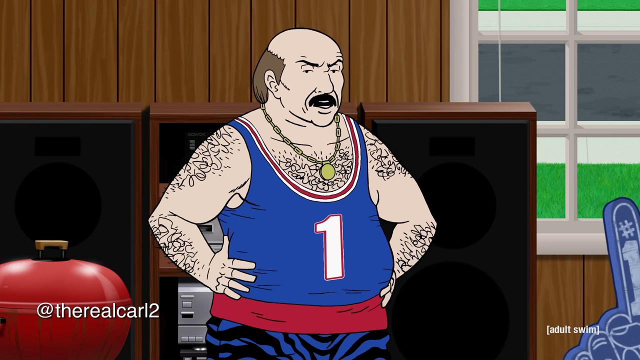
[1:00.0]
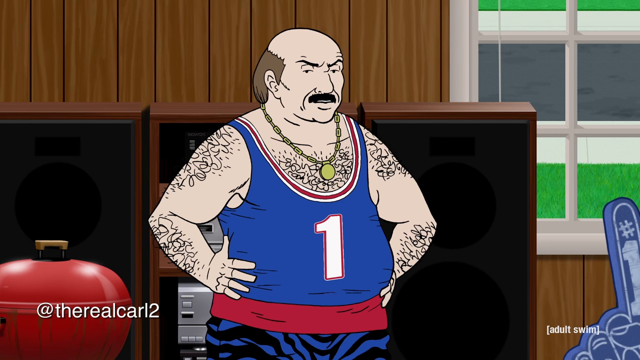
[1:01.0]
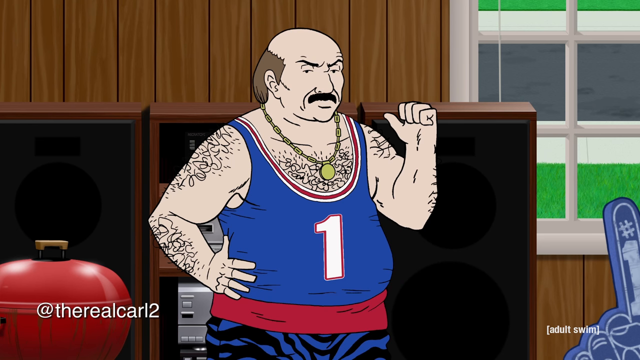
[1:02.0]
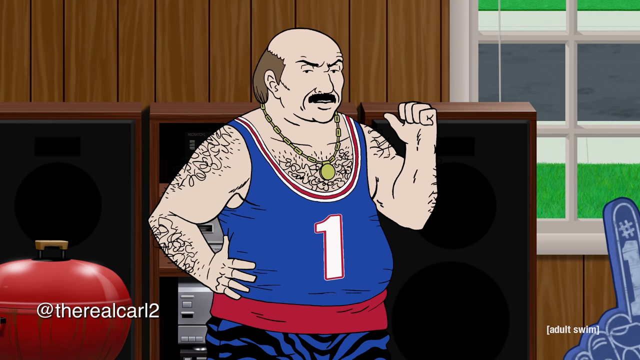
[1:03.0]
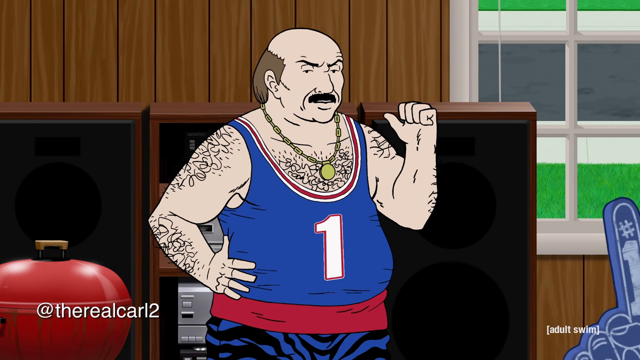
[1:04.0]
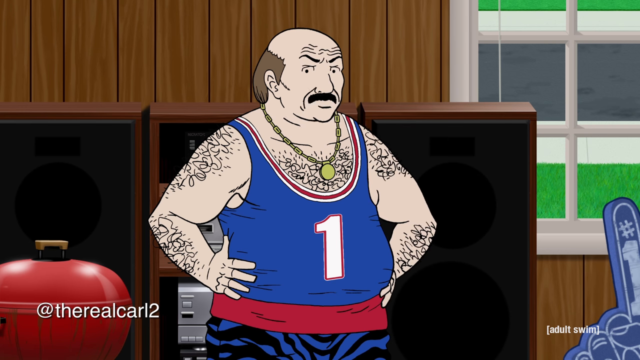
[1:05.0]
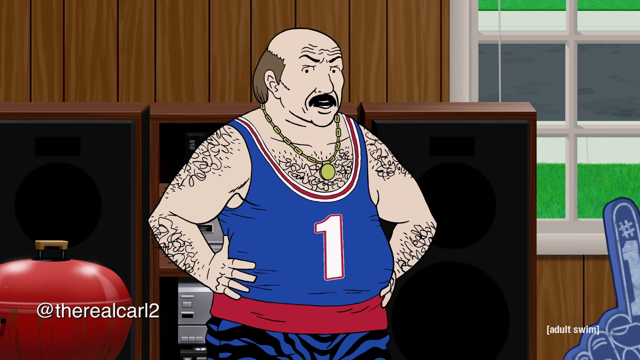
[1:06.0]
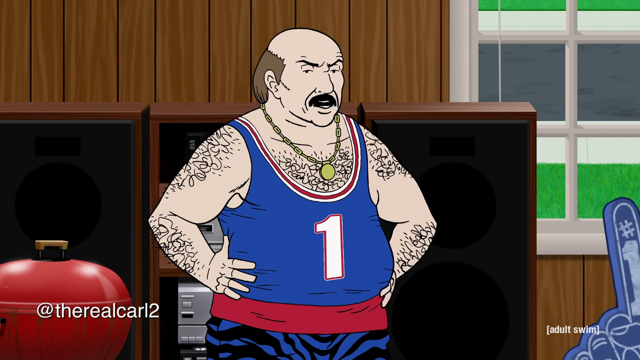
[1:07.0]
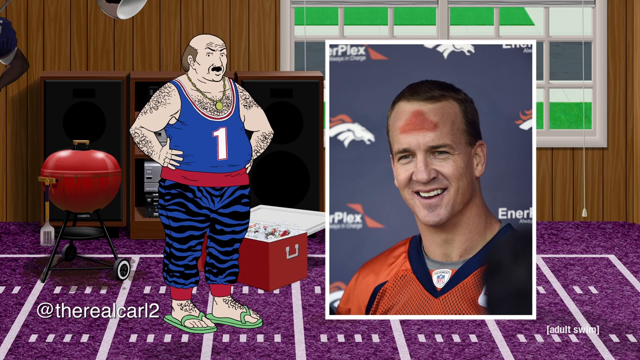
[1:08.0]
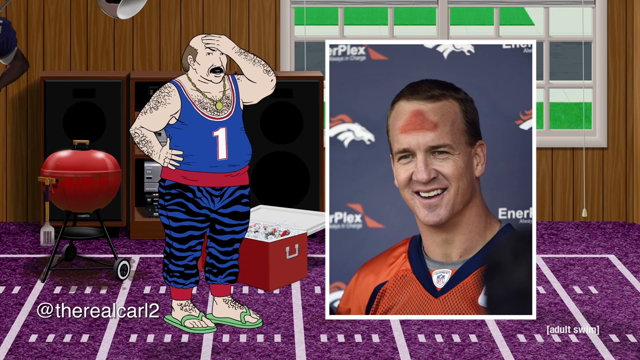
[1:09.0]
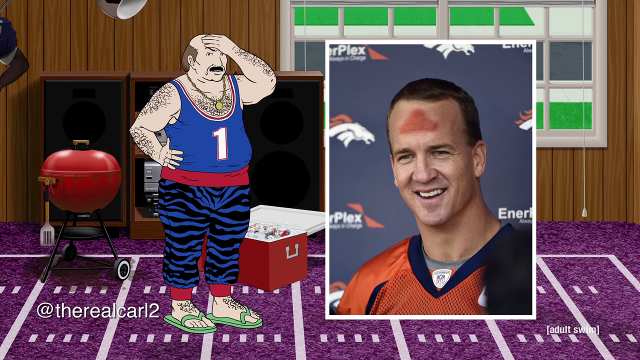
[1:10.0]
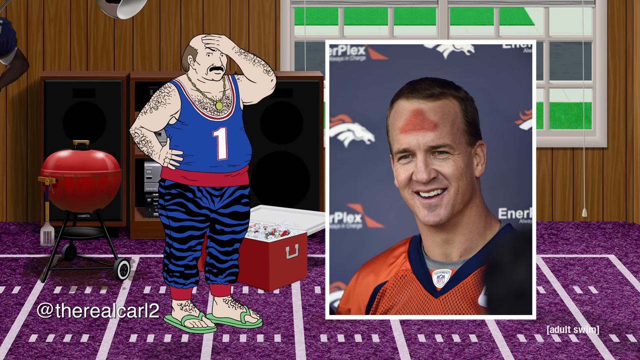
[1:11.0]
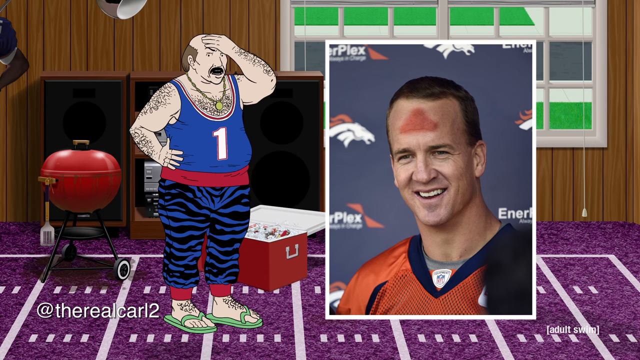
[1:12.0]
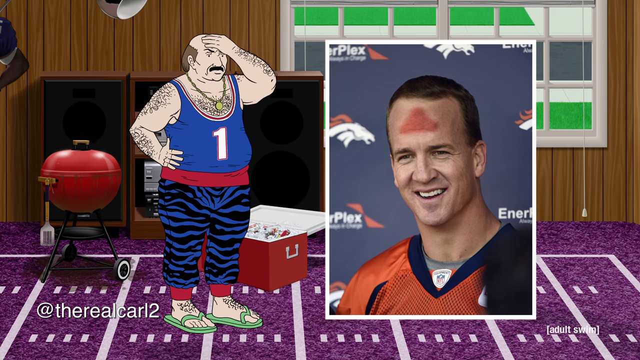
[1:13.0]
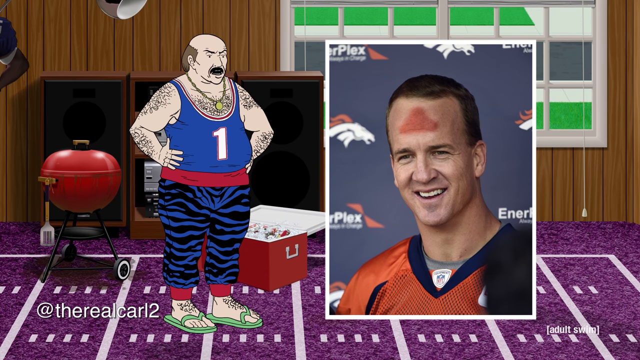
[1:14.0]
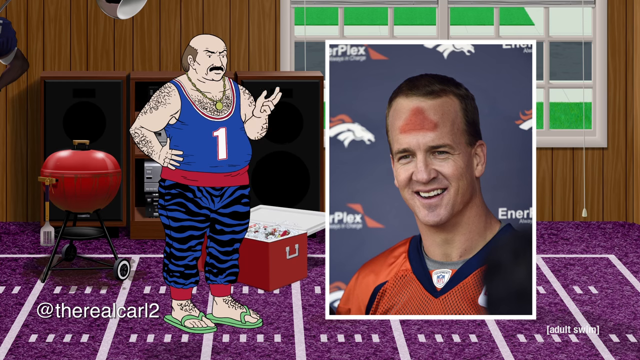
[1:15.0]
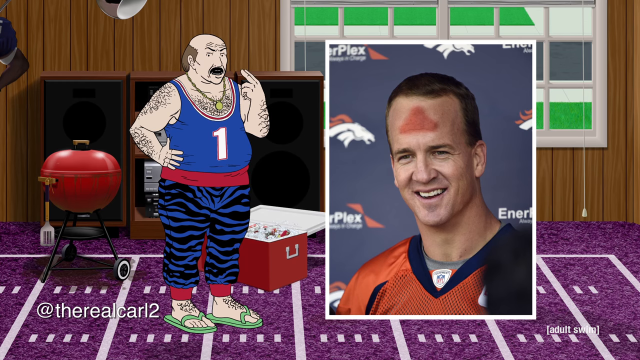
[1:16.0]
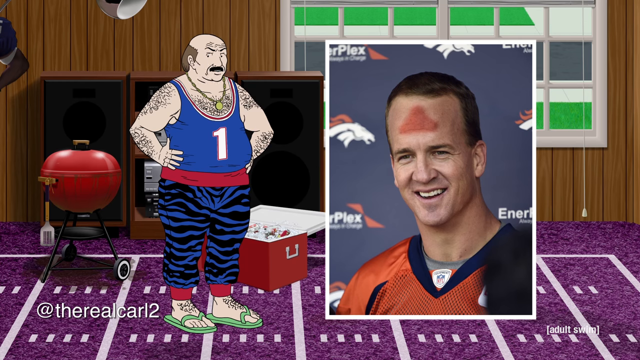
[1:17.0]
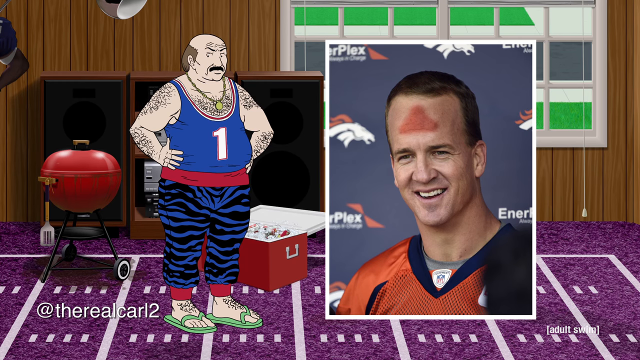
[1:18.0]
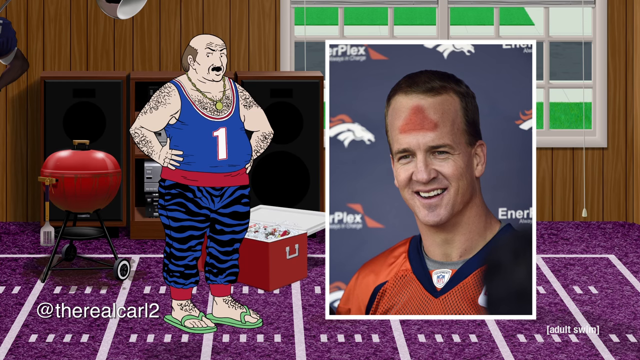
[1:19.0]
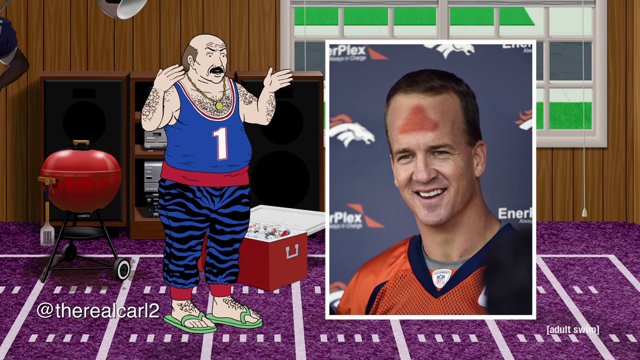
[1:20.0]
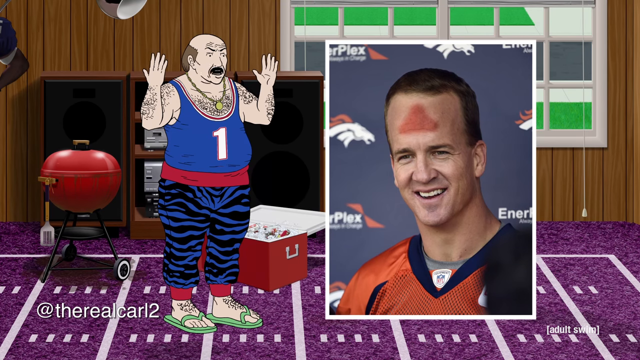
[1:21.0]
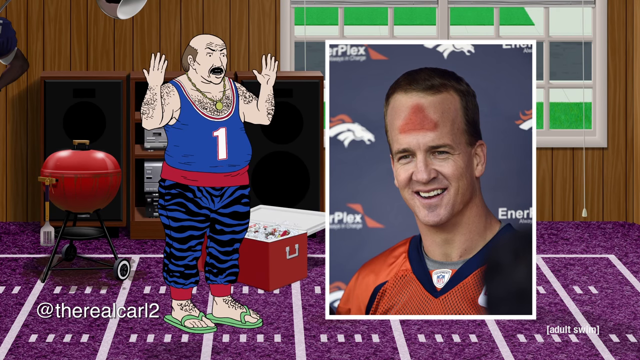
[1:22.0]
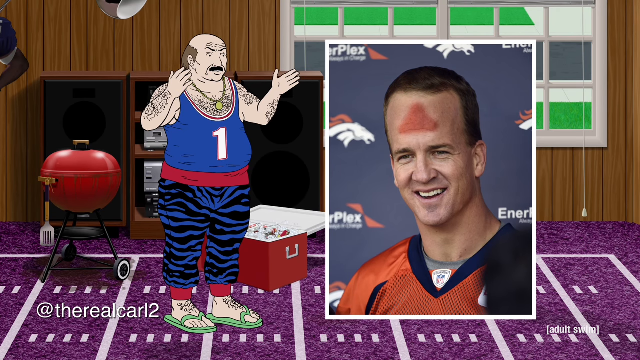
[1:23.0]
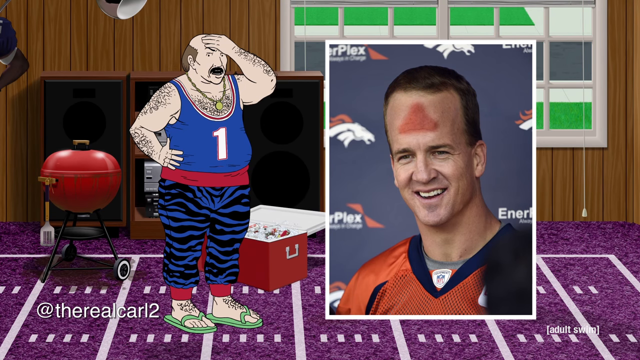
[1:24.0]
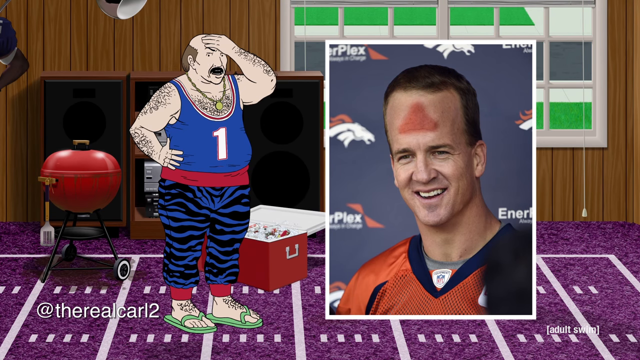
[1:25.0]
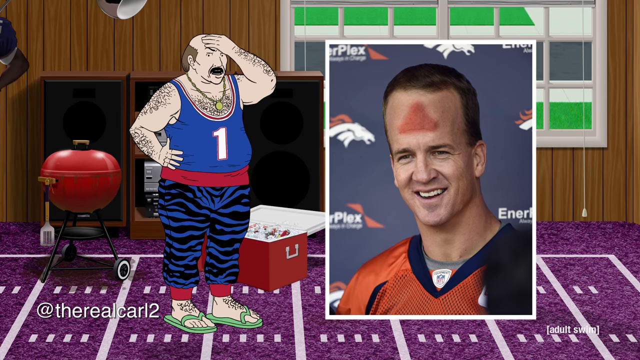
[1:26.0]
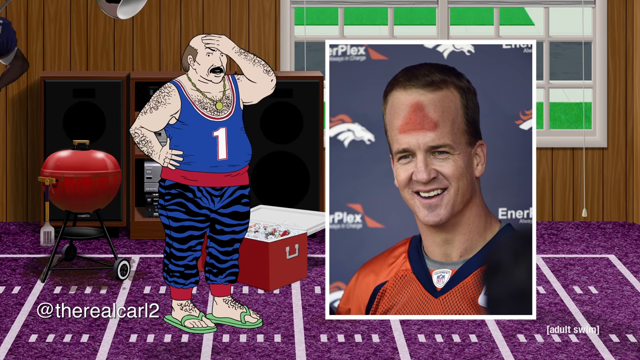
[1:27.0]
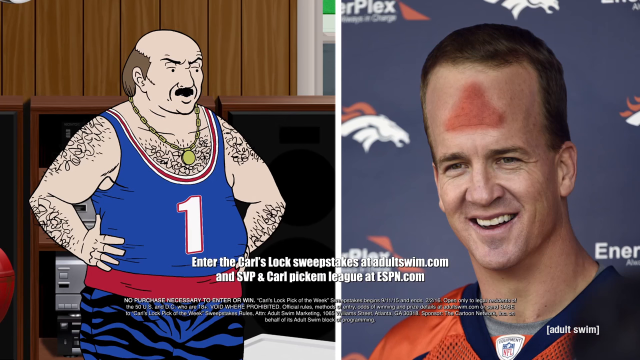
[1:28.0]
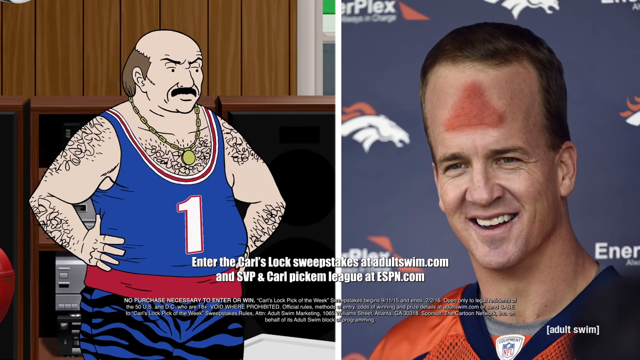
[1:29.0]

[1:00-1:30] The man wears a top with number one written on it and a necklace, and he seems to be talking to someone behind the camera. Next to him is a big picture frame with a football player wearing a red jersey with a blue collar; the player has a scar on his forehead and seems to be smiling. A competition link is shown. The carpet in the room is purple, and through the windows the green of the lawn outside can be seen. Next to the man is a braai stand, and behind him are three wooden cabinets, with a silver radio visible on the center one. As he talks, he lifts one of his hands and touches his forehead. It seems to be a very tense discussion.